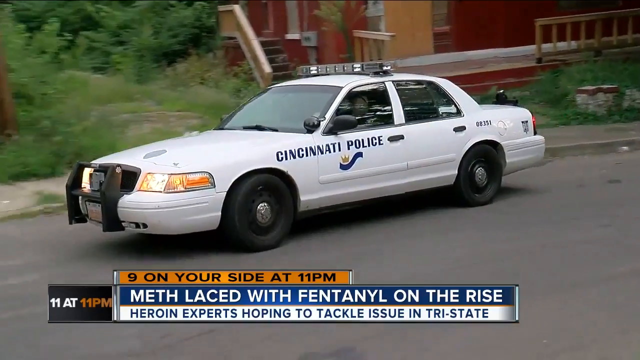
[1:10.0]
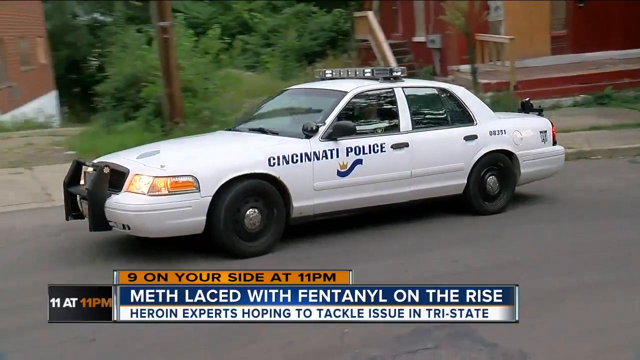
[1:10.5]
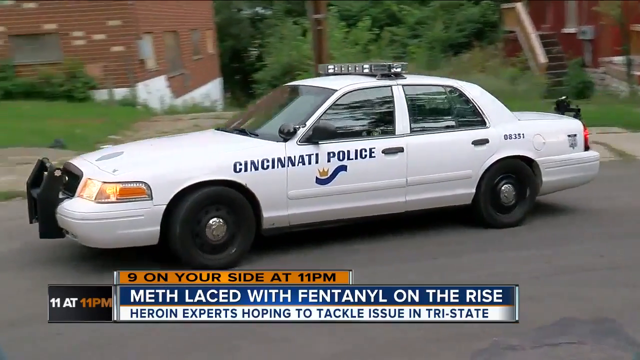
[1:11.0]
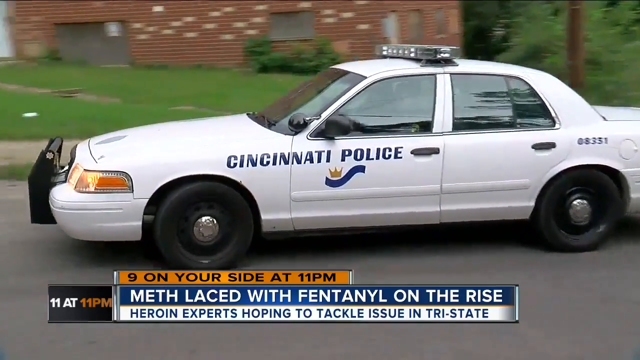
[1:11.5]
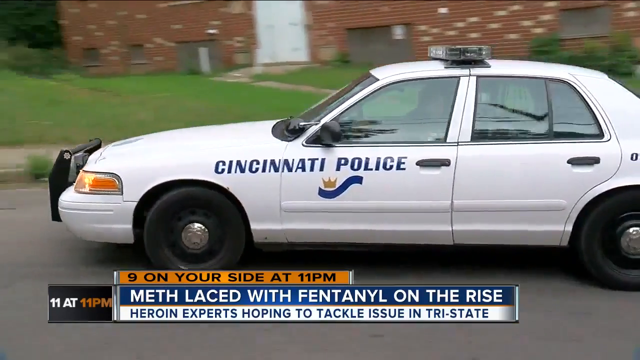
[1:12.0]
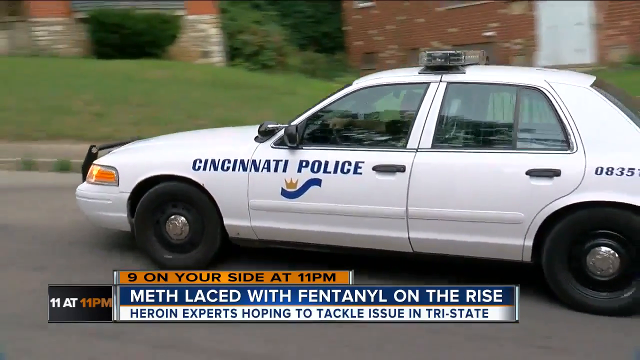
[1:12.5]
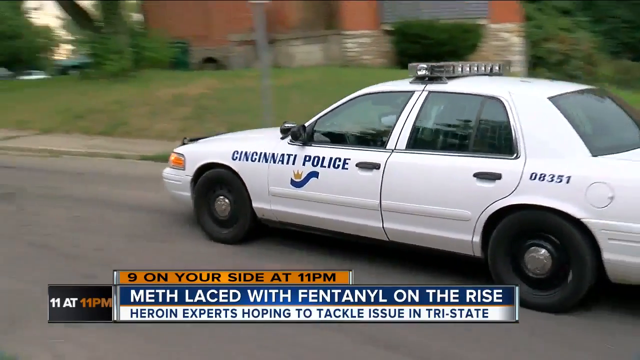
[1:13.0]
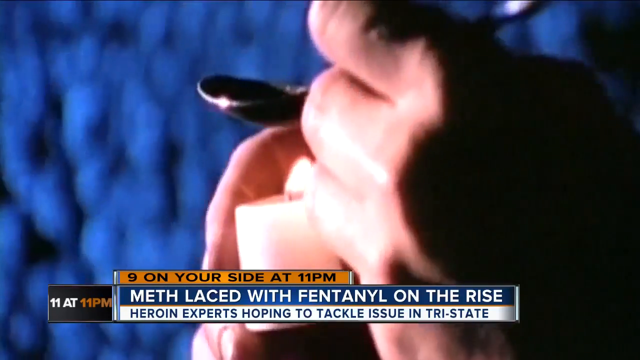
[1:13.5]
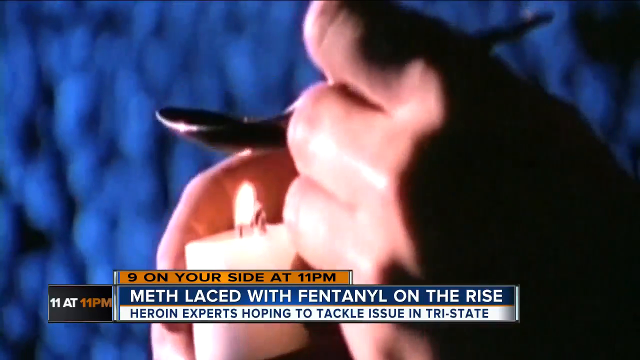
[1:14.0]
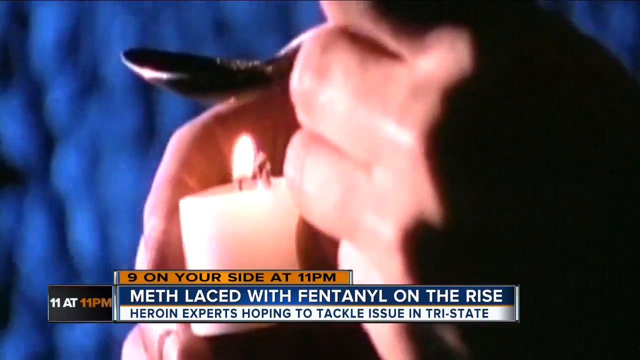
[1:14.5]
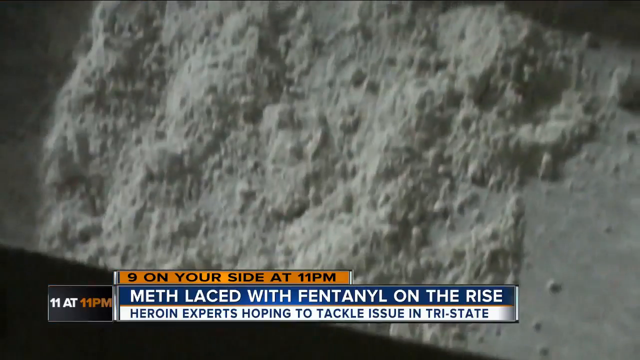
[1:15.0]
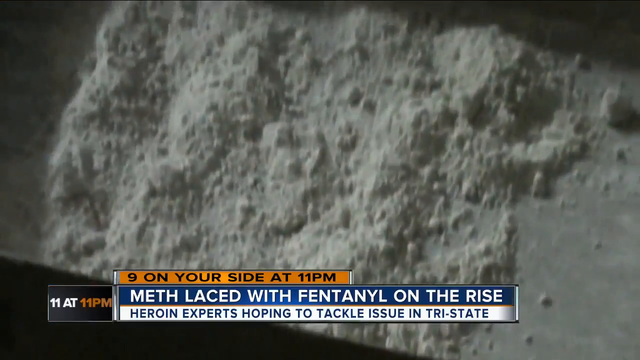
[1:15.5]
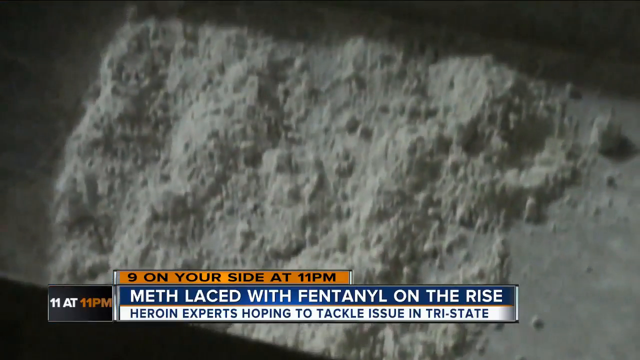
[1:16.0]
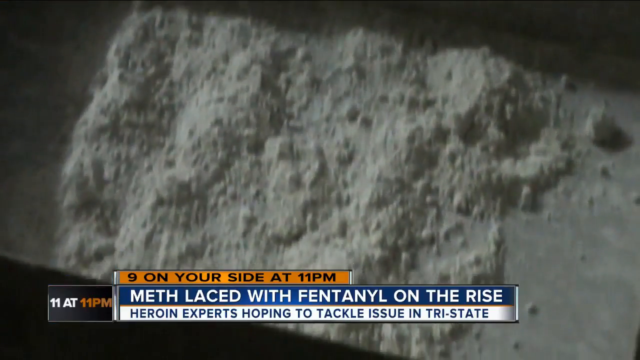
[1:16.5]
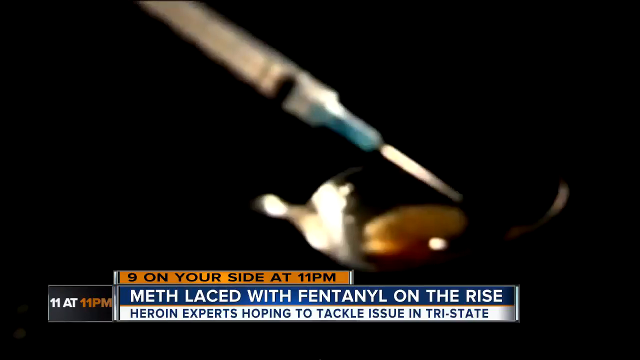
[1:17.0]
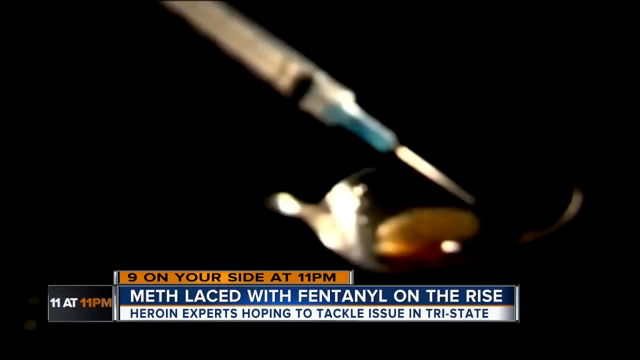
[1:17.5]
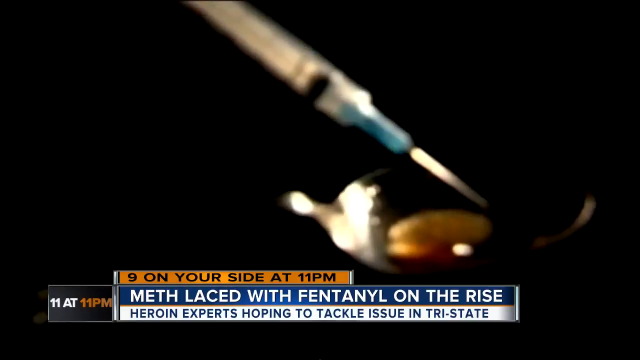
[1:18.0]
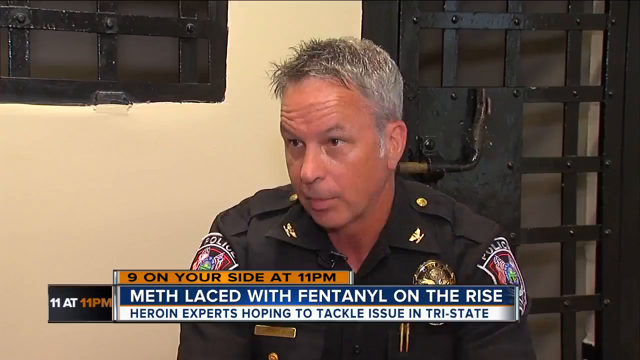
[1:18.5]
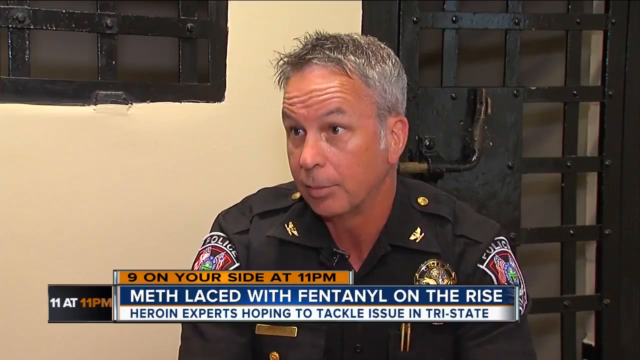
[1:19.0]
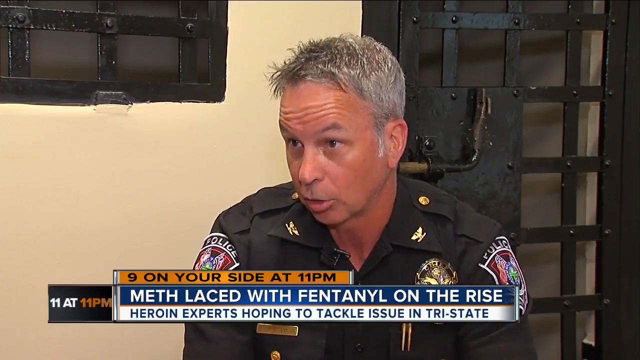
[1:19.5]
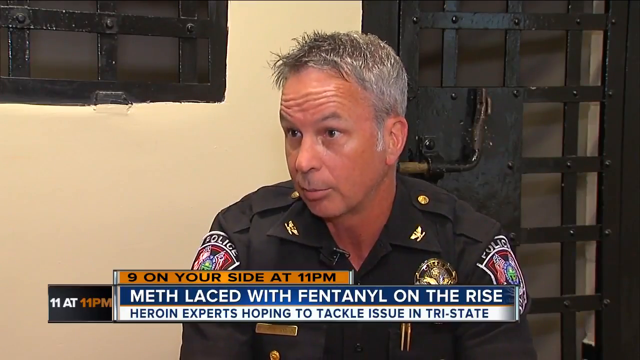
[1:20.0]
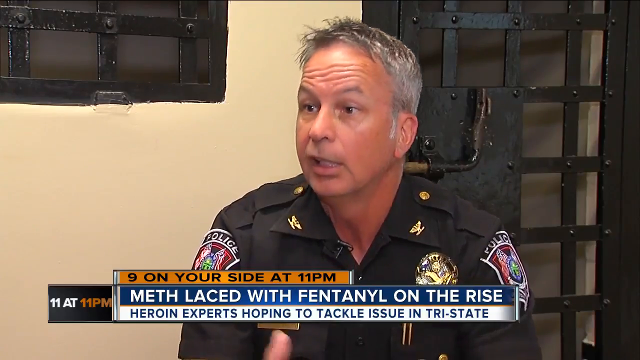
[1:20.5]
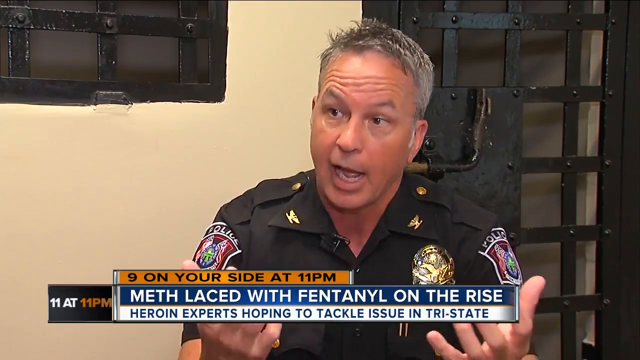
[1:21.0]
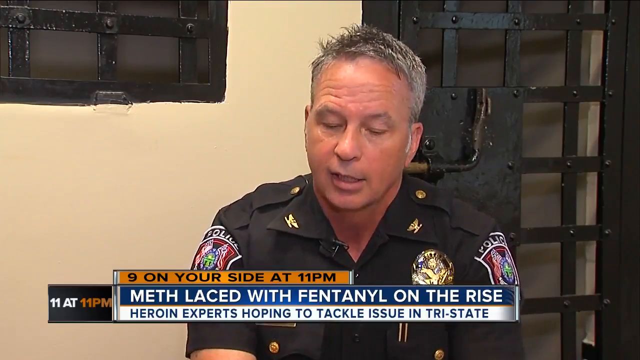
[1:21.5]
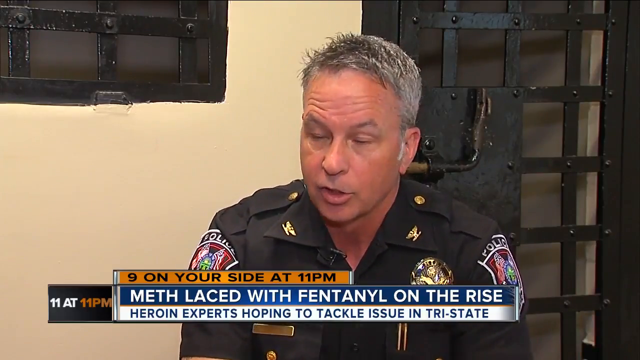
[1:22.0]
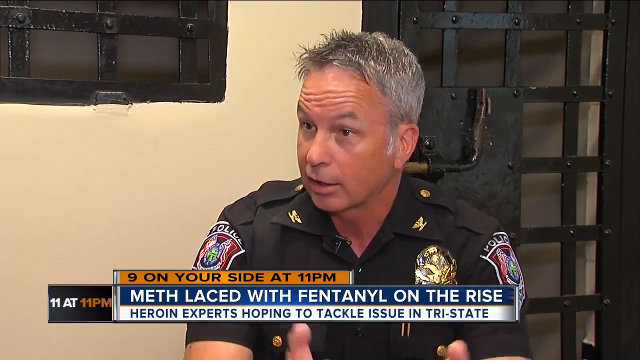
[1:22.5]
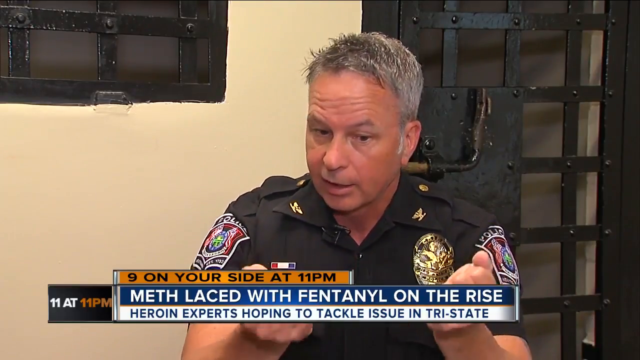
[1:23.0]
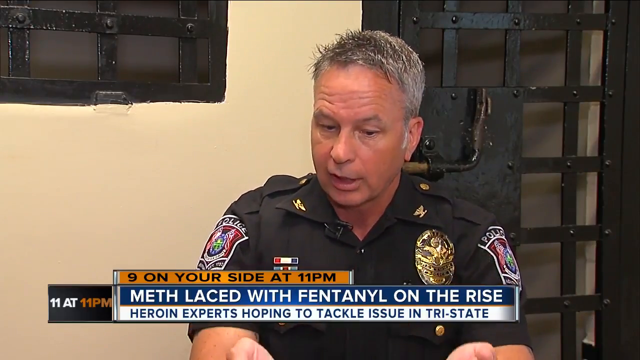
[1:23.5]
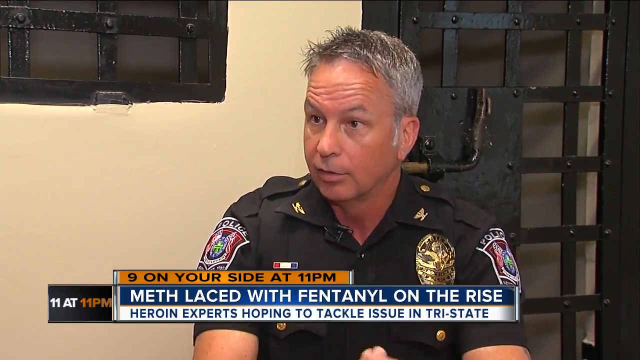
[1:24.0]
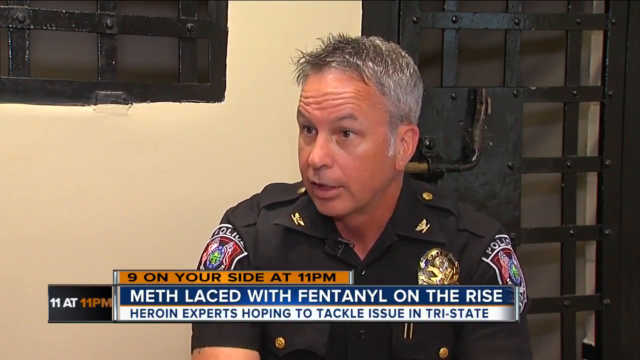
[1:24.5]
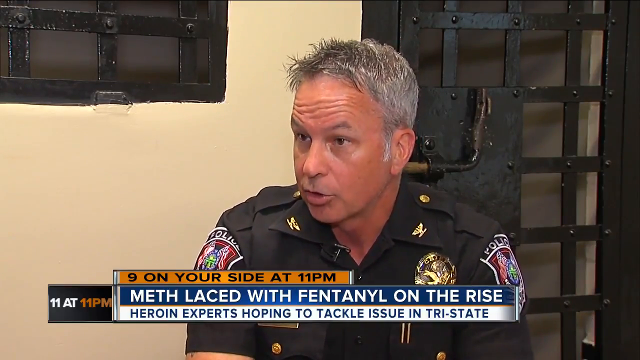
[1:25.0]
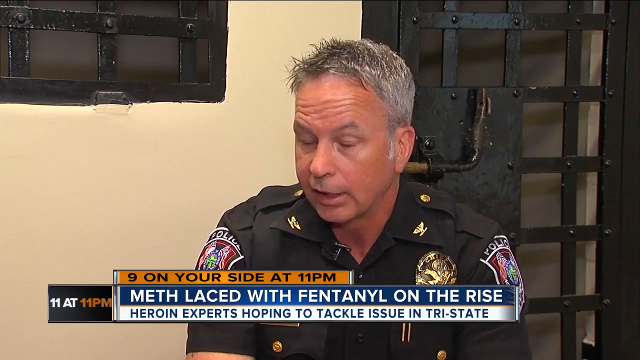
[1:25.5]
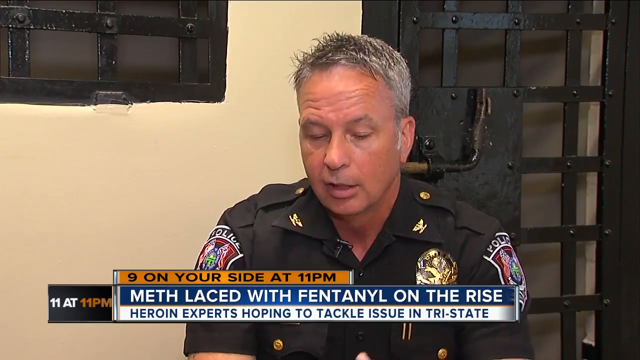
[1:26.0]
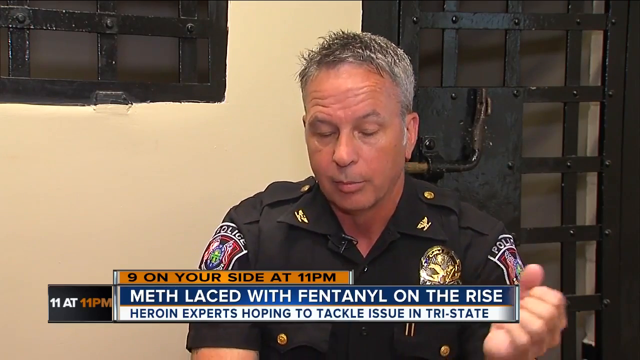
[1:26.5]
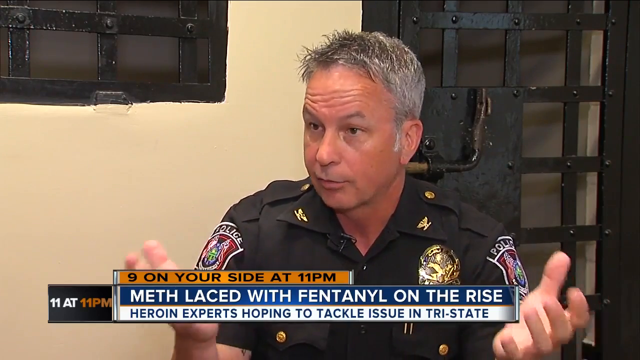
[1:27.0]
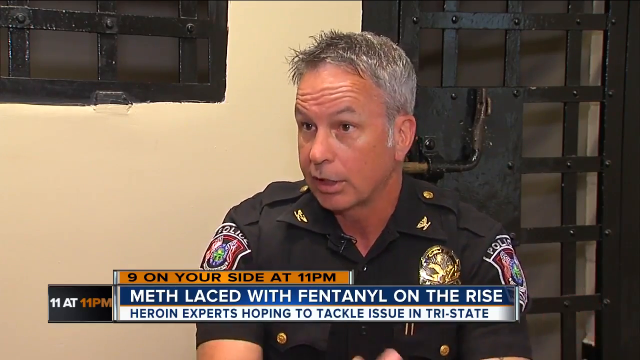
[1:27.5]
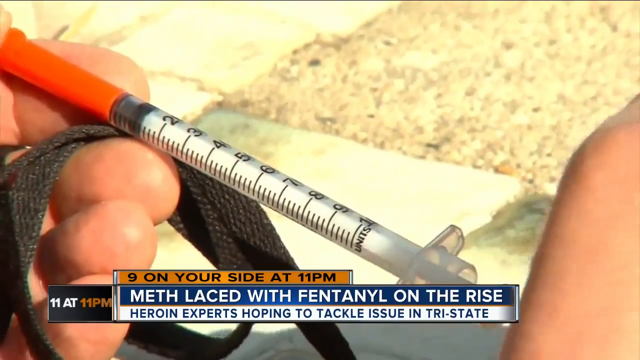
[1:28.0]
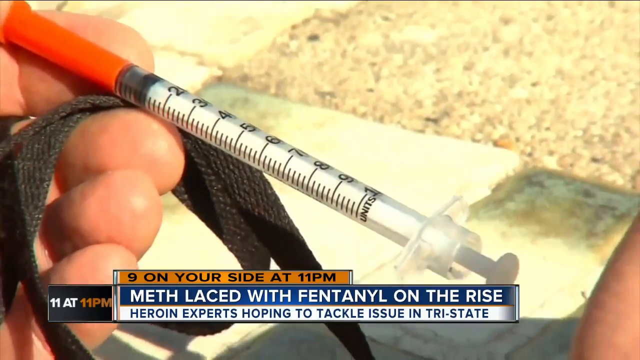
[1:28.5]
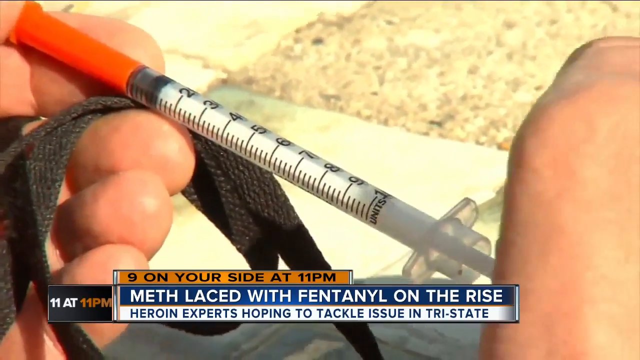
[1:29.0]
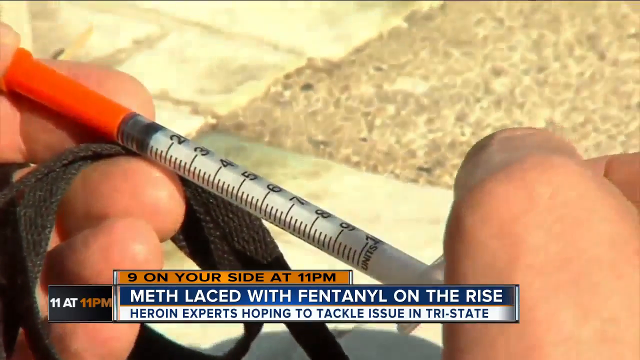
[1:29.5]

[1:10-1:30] A white Cincinnati police car drives, and the camera follows it. The same headline is at the bottom in white letters on a blue banner, ending "laced with fentanyl on the rise", with "heroin experts hoping to tackle issue in tri-state" beneath it in blue letters on a white background. A close-up shows a pair of hands: the left hand holds a tablespoon and the right hand holds a candle, with the bowl of the spoon held over the candle. A big pile of white powder follows, then an artistic shot of the police car, then a brown liquid in the bowl of a spoon with a 1ml syringe with a blue needle in the liquid. The policeman continues to talk. Then someone holds a 1ml syringe in their hand; it has an orange cap and 0.1ml graduations.